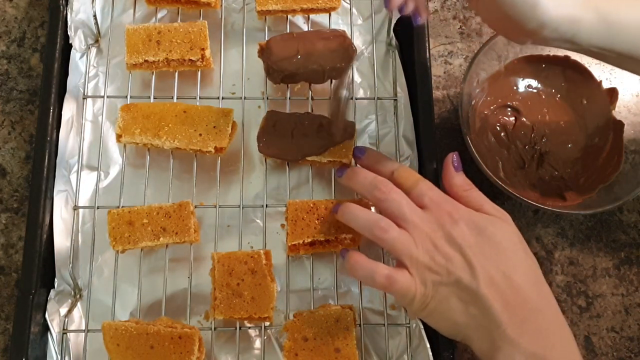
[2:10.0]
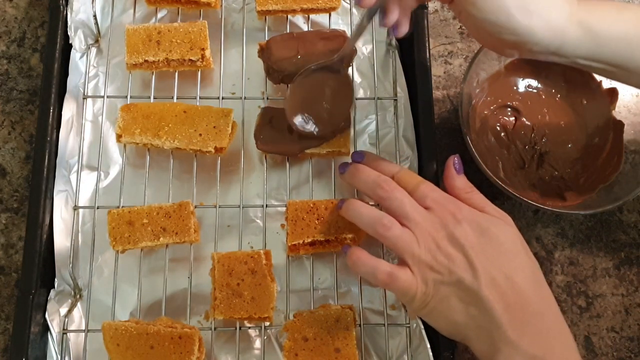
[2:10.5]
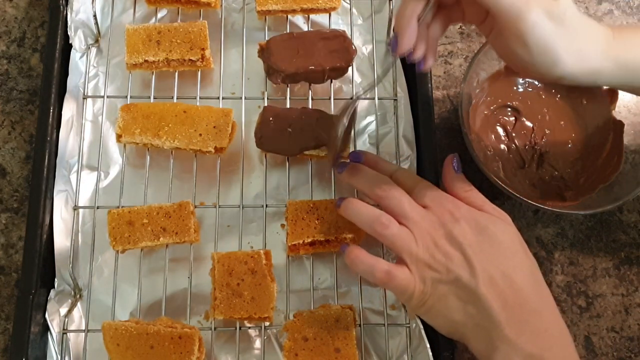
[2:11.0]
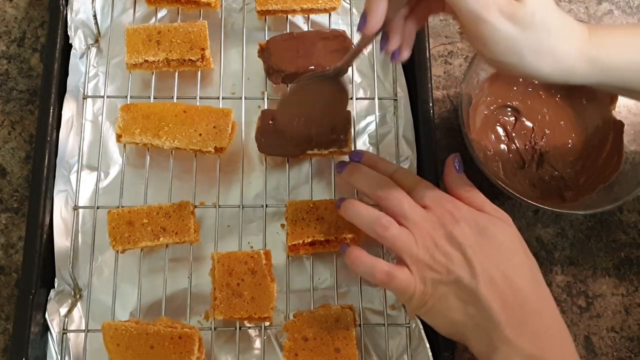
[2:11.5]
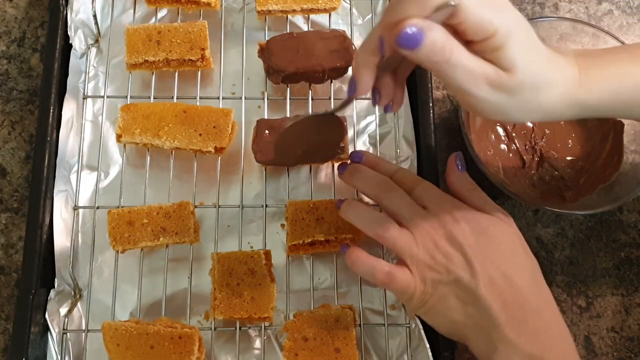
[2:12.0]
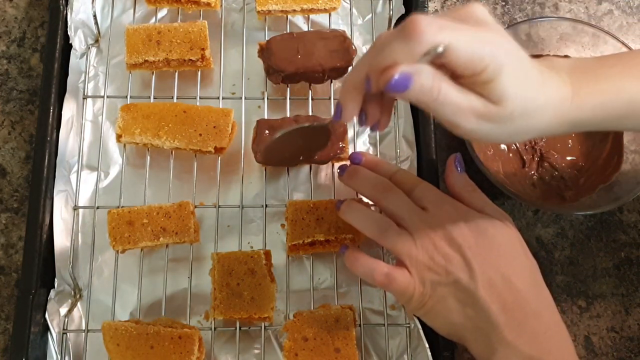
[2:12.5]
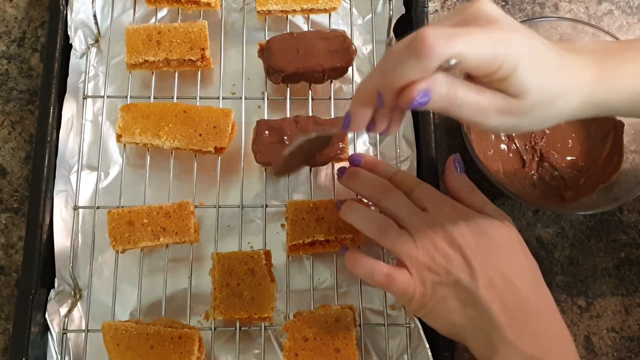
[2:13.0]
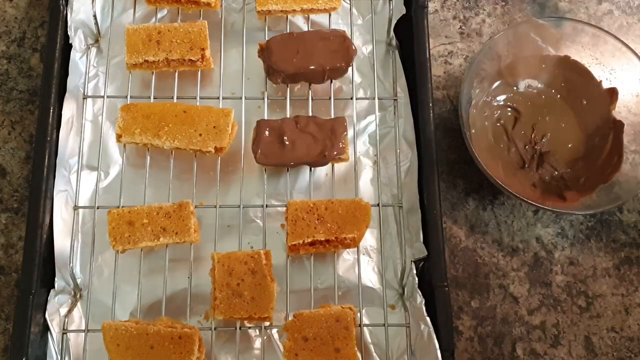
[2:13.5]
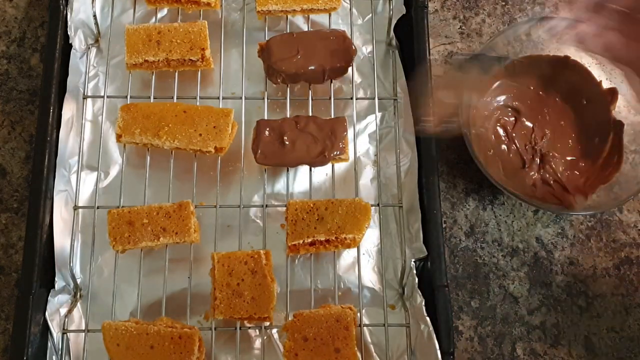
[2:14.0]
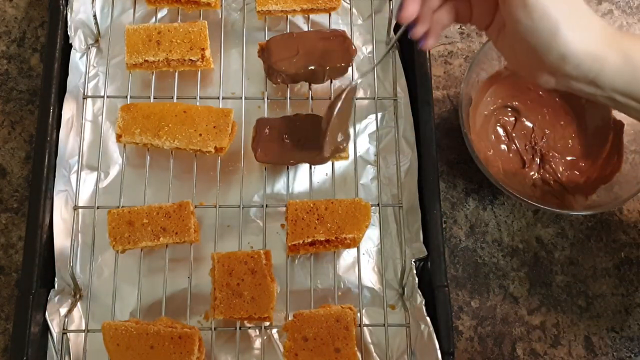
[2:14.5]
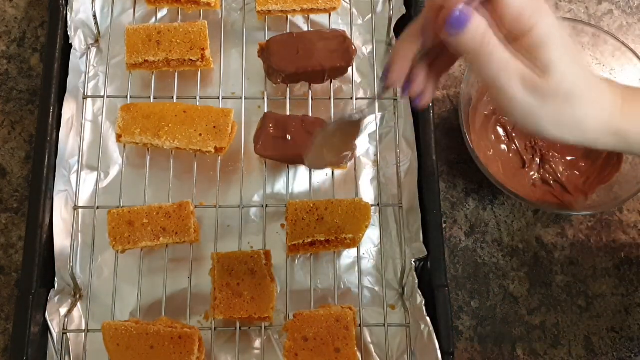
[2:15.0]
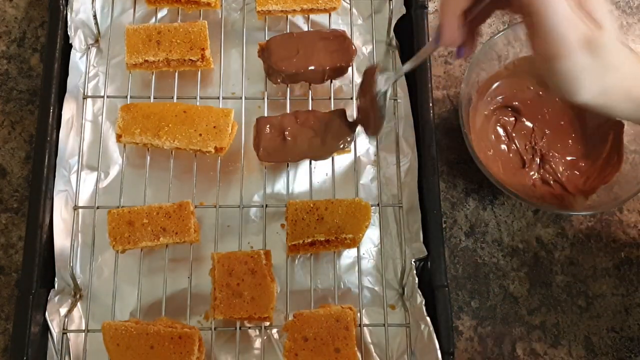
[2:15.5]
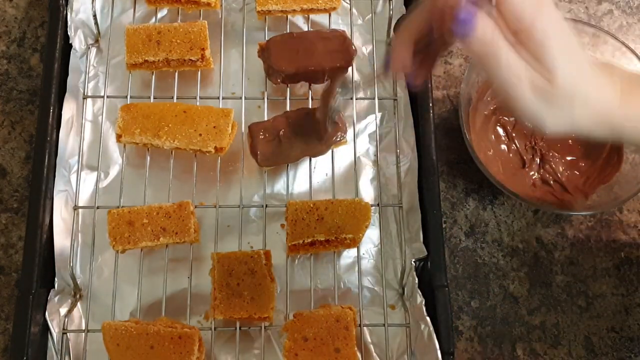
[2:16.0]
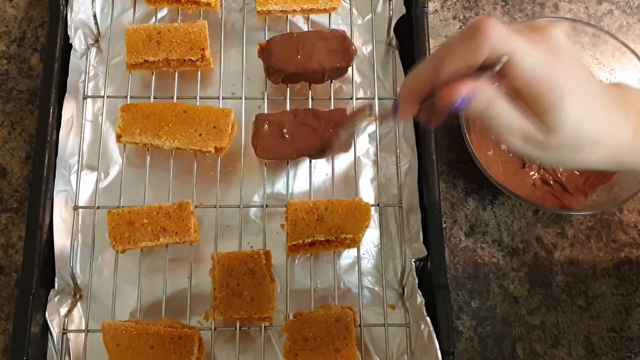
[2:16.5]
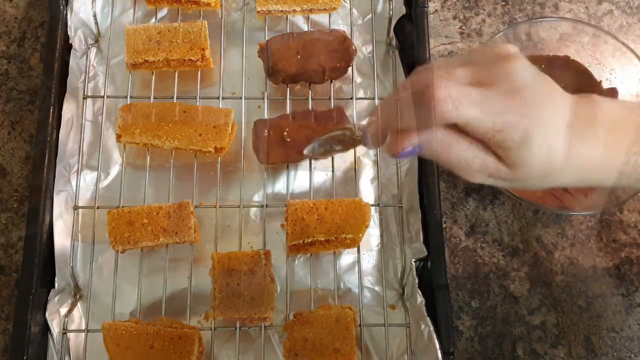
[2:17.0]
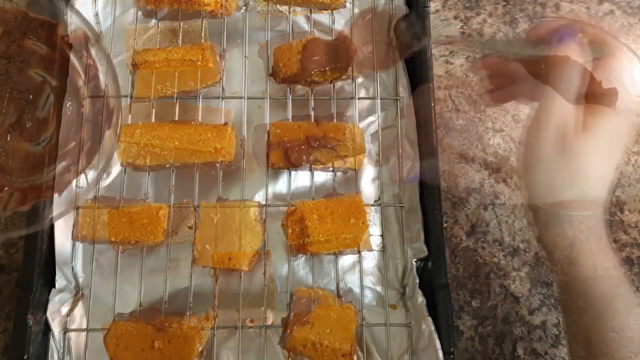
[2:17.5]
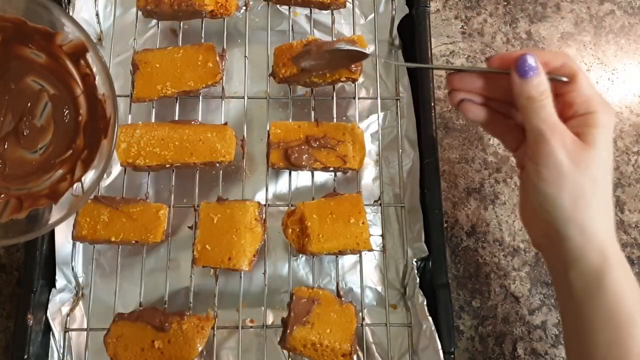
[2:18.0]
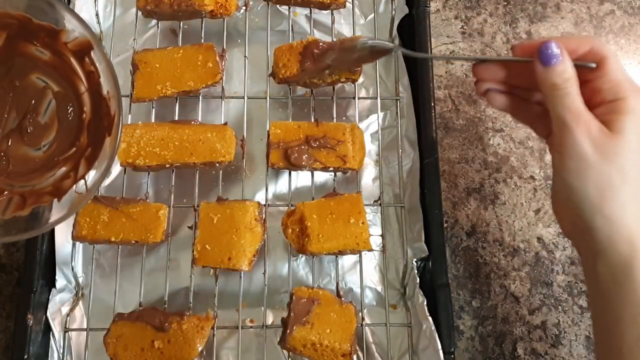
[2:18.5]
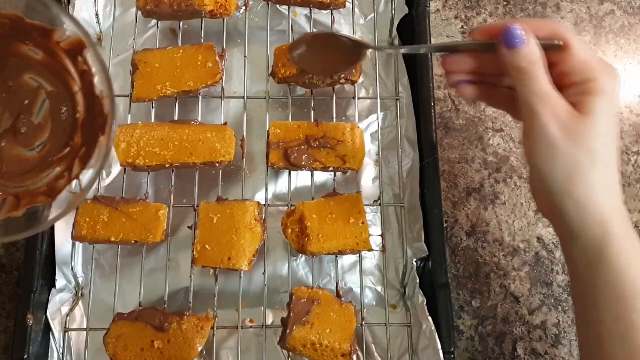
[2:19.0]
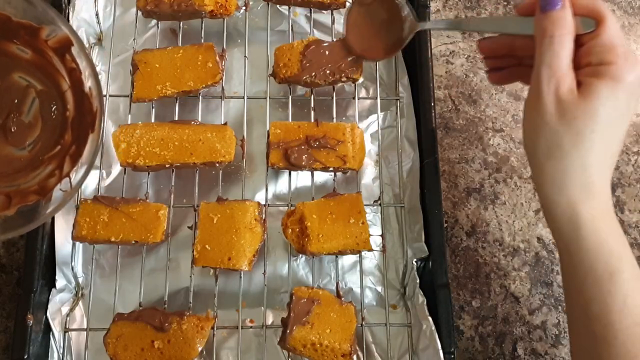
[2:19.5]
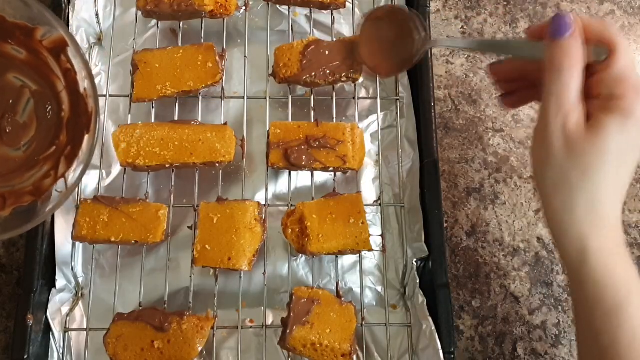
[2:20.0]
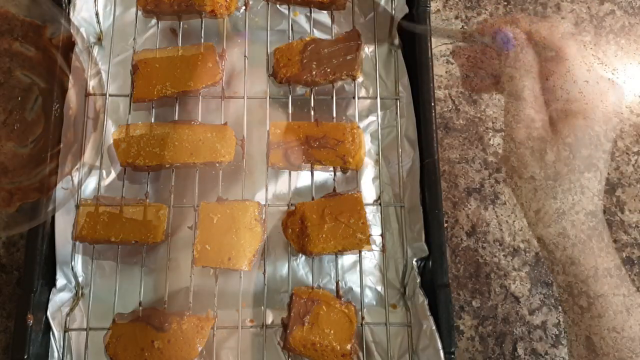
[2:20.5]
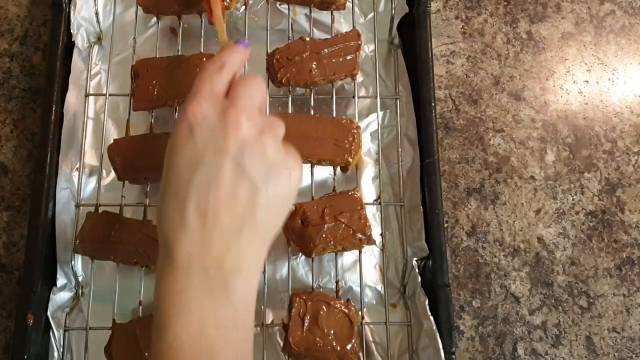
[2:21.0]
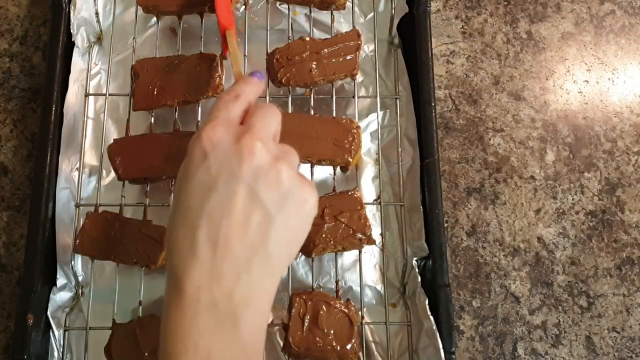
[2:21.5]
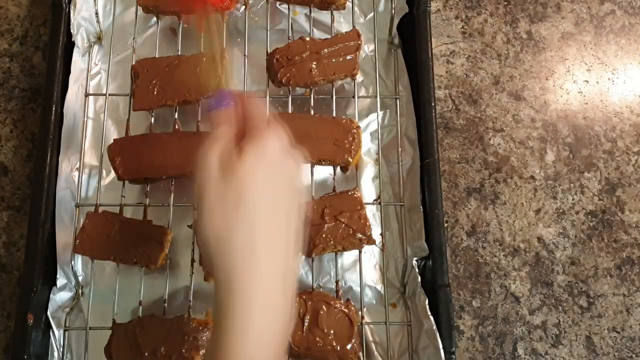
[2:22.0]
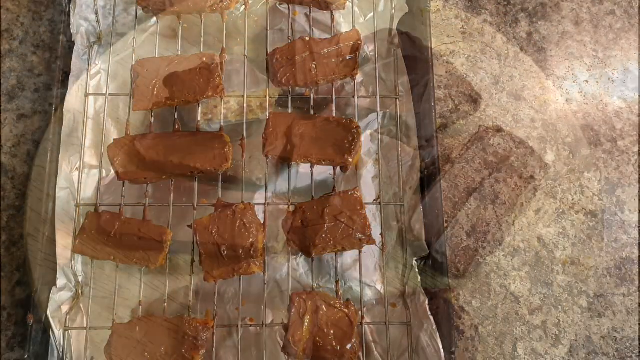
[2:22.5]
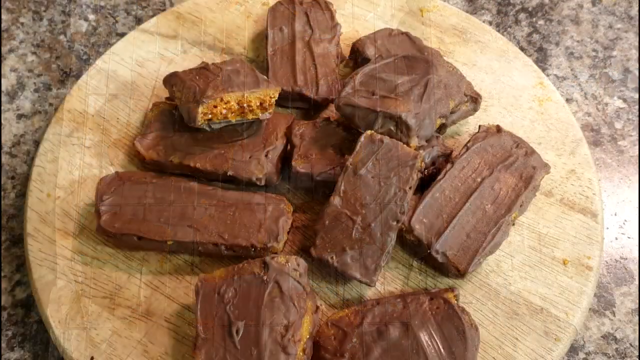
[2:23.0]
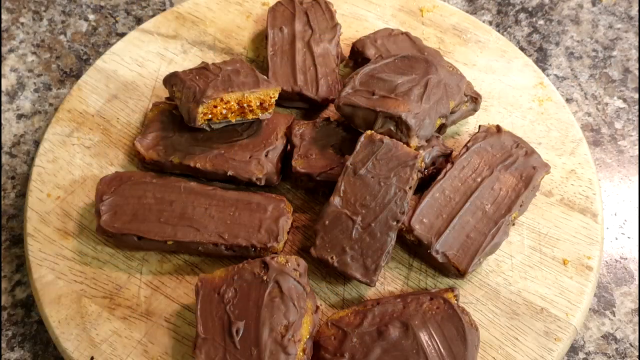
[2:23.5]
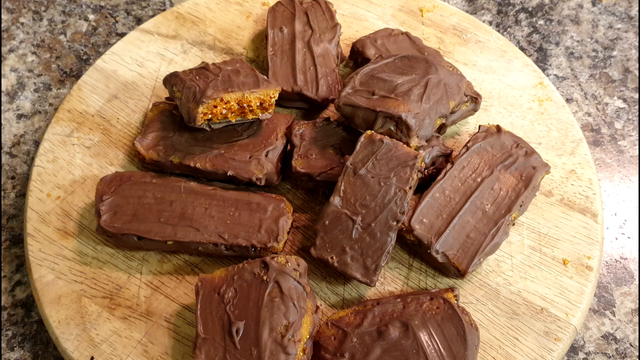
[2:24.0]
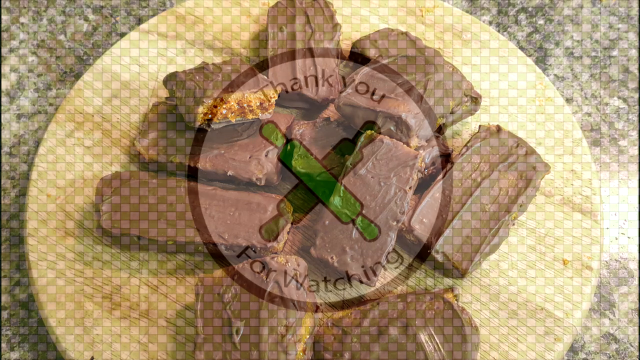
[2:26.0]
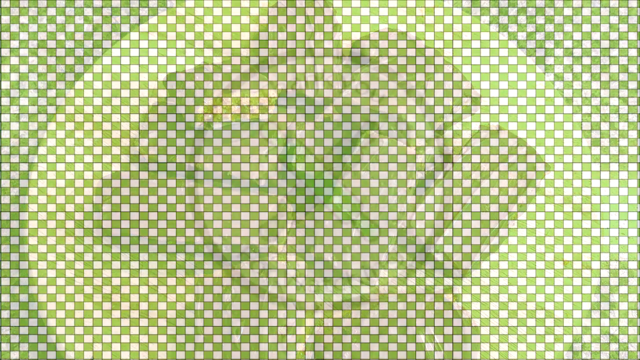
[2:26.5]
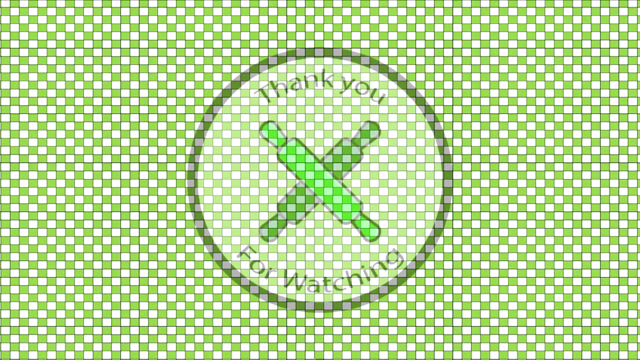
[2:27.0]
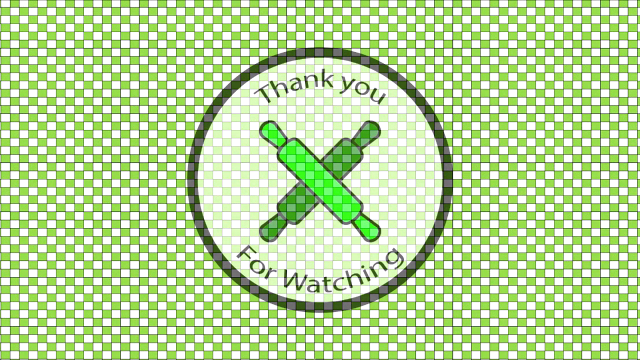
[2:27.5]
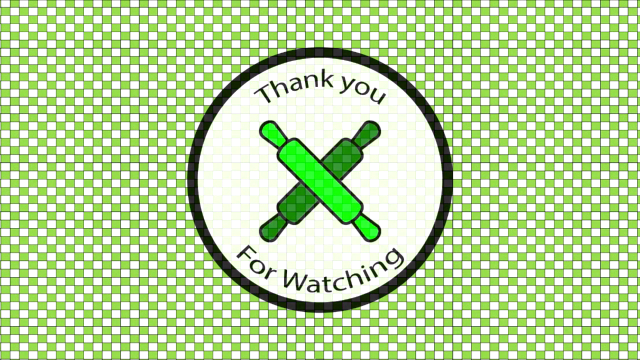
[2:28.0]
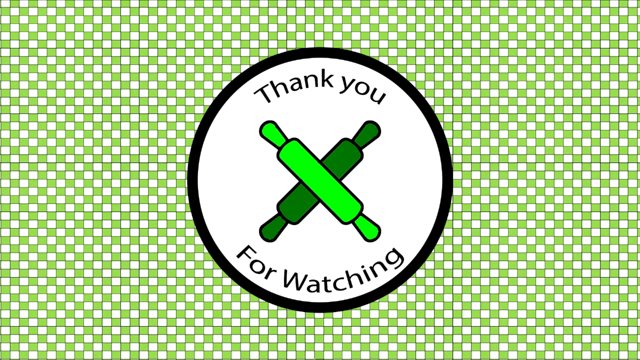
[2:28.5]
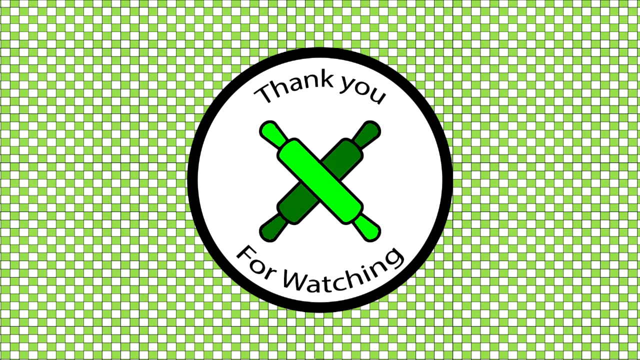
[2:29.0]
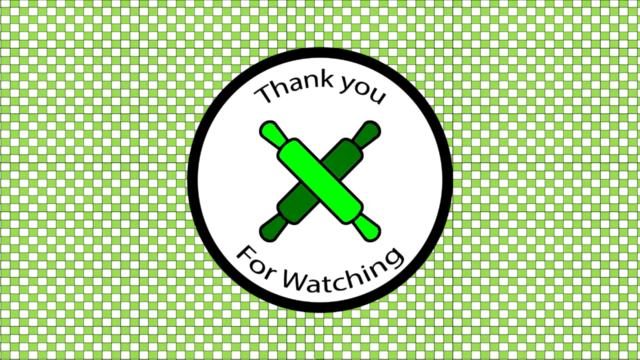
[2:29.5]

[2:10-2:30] The person continues using the metal spoon to scoop chocolate onto the crispy treat and spread it around, using one hand to hold the treat in place and the other to spoon on the chocolate. The video transitions to another view: they hold the bowl of melted chocolate in their left hand, which is mostly off-camera, and spoon the chocolate onto the treats with their right hand, moving it around to coat the treats thoroughly. A quick view follows of the treats, now mostly all covered in chocolate. Finally, a photo of the finished product shows a pile of the crispy, crunchy treats. The one sitting on top of the pile has been broken open to reveal the crunchy texture inside. The pile is sitting on a round wooden cutting board or presentation board, which is sitting on a granite countertop.